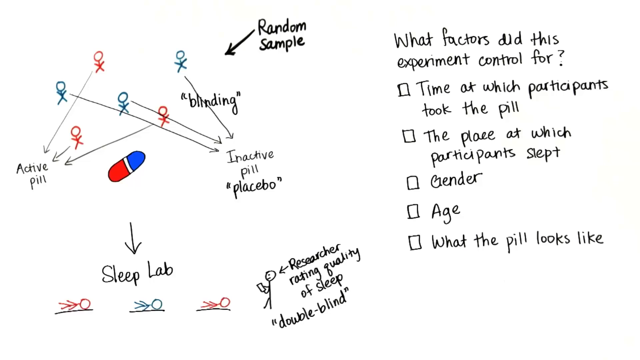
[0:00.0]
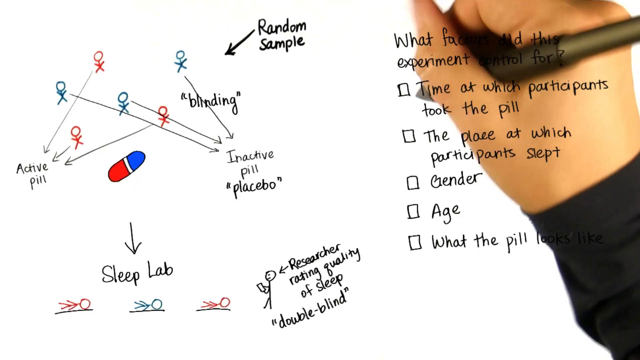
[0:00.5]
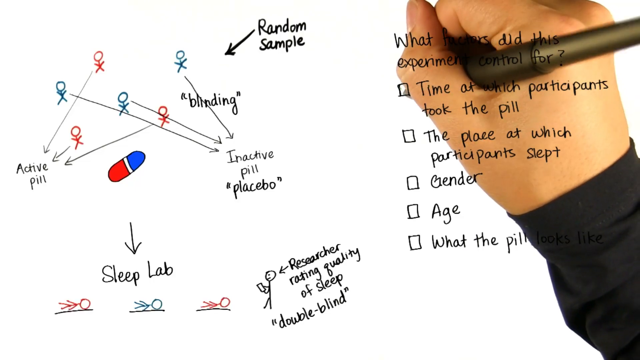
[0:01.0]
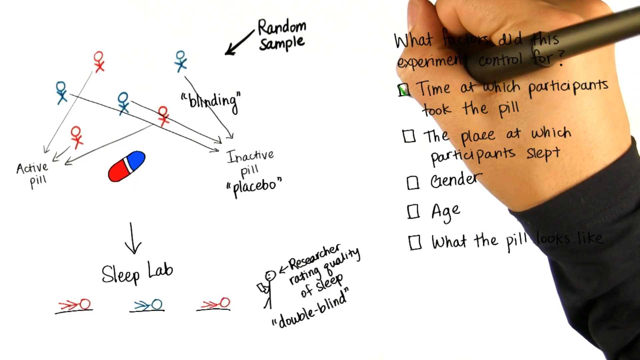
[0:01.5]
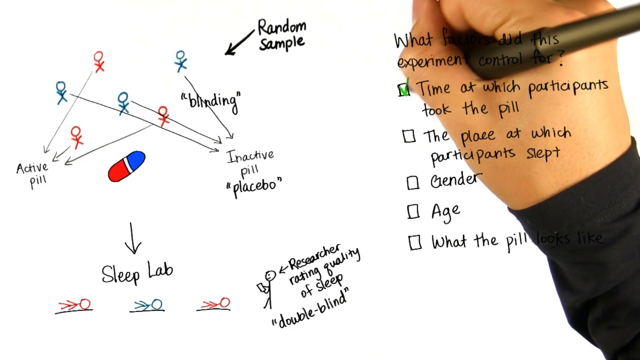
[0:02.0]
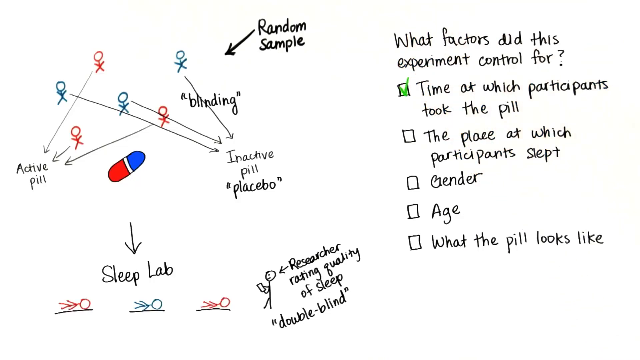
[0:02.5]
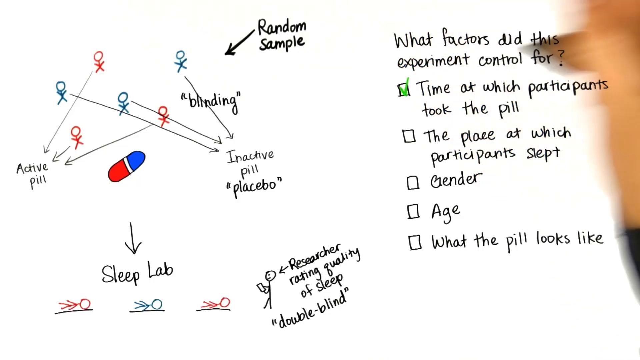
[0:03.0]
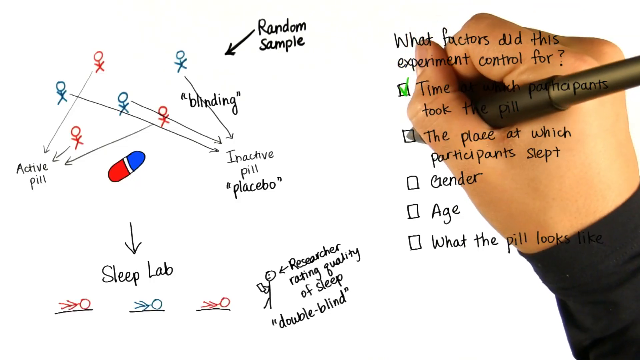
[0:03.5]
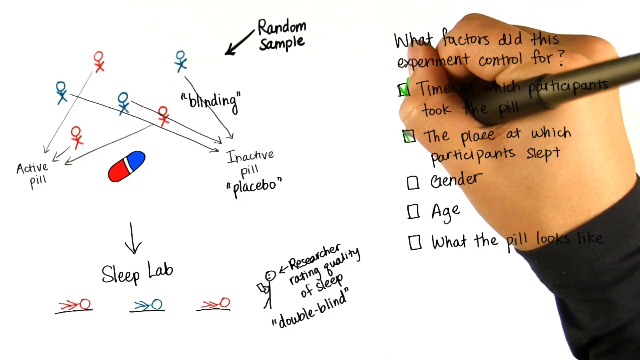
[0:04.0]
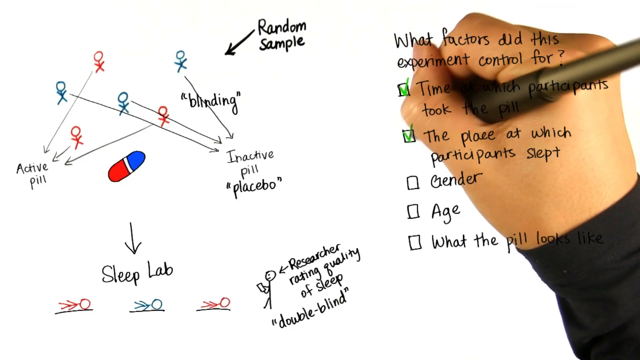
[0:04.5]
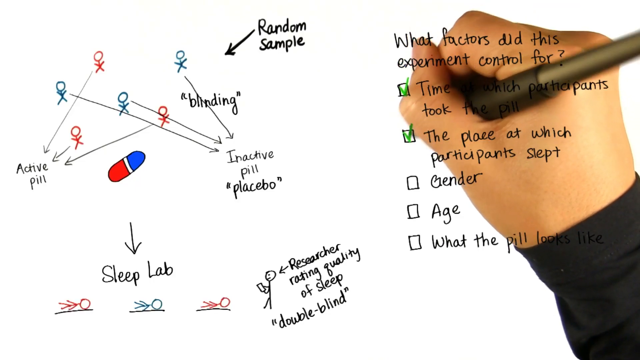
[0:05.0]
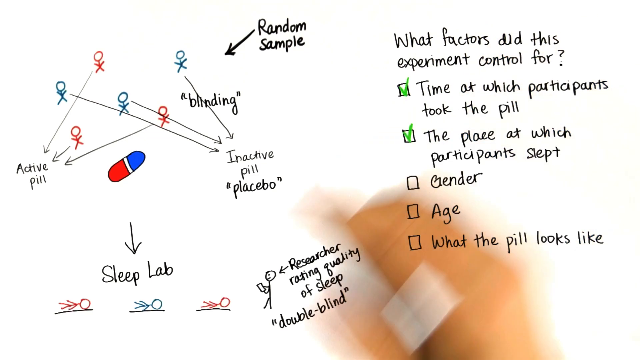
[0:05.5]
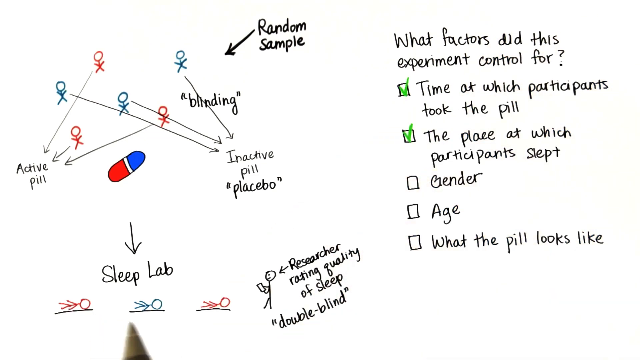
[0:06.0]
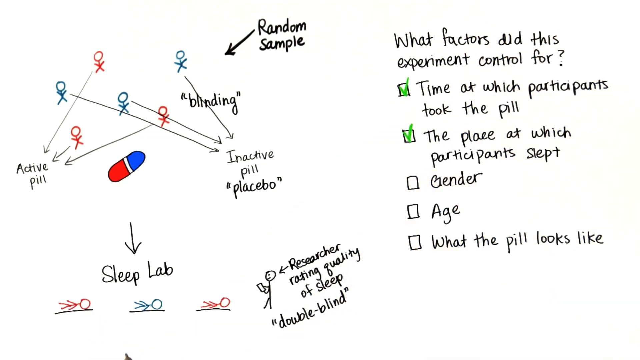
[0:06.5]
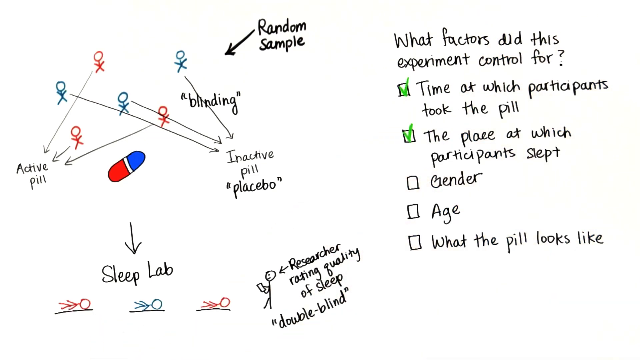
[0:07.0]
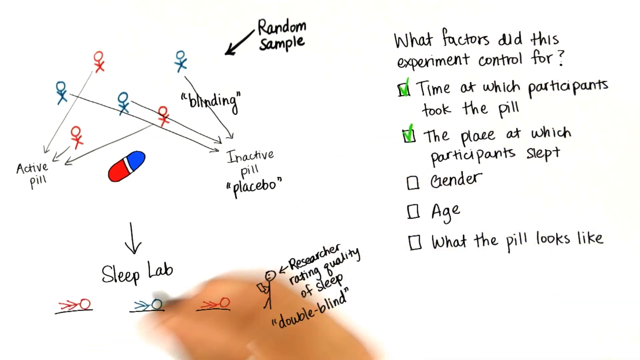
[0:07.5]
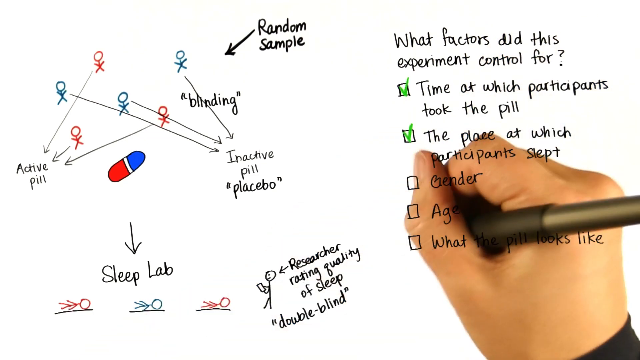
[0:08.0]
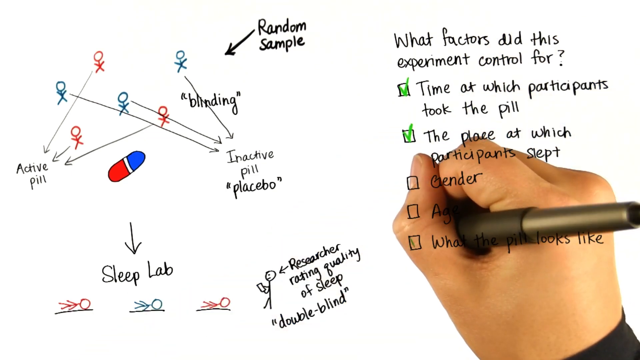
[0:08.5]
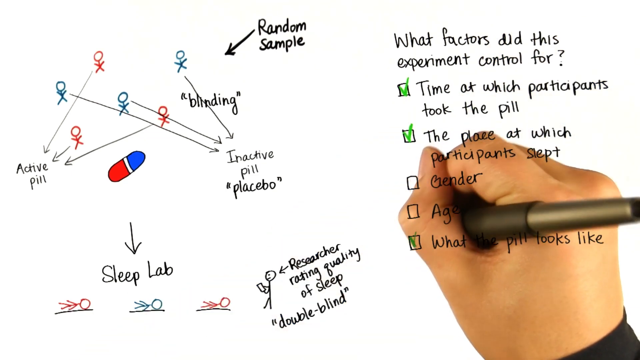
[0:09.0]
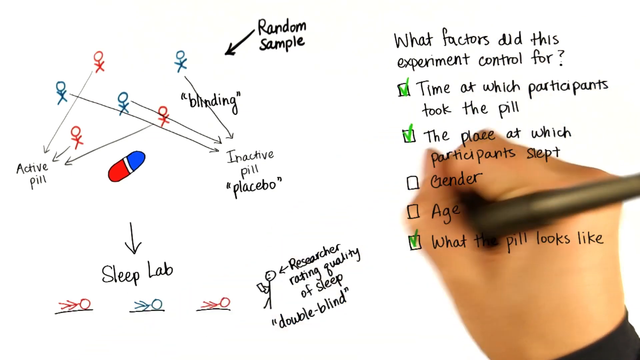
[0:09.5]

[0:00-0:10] Hand-drawn pictures fill the left-hand side of the screen: stick figure drawings of people with arrows pointing to different words. Some of the people are red and some are blue. "Random sample" points at the group of people, and there are words such as "inactive pill" or "placebo". A drawn pill capsule, also red and blue, has an arrow going down to the words "sleep lab", and below are stick figures of people lying down sleeping on a bed and a researcher rating the quality of sleep in a double-blind experiment. On the right-hand side of the screen are the words "what factors did this experiment control for", followed by "the time at which participants took the pill", "the place at which participants slept", "gender", "age" and "what the pill looks like". A hand holding a black pen comes onto the right-hand side of the screen and ticks little boxes next to all of the factors written on the screen.